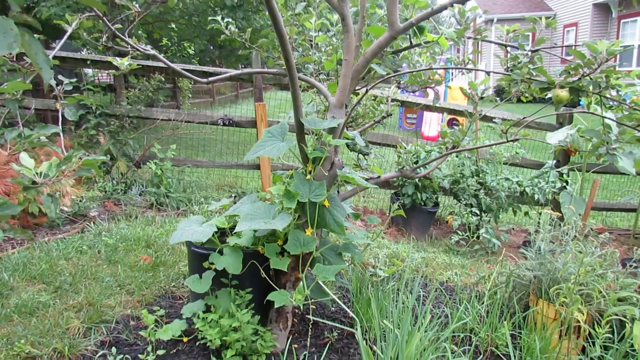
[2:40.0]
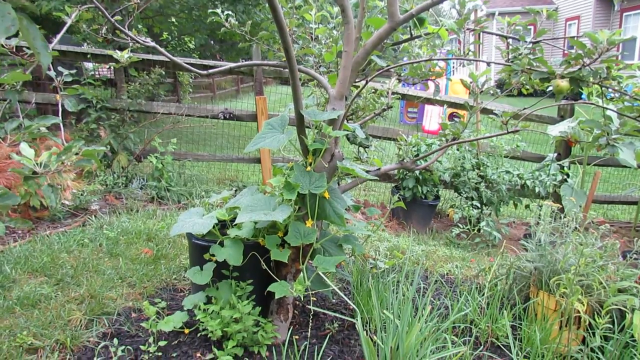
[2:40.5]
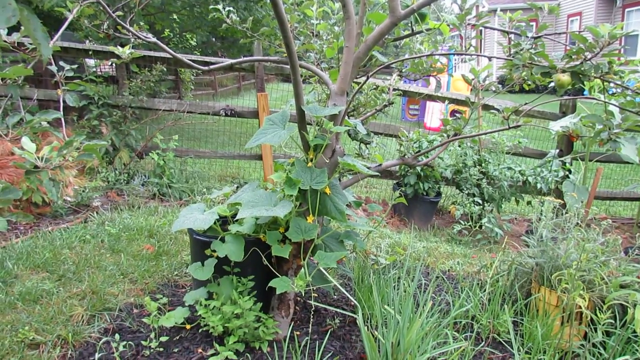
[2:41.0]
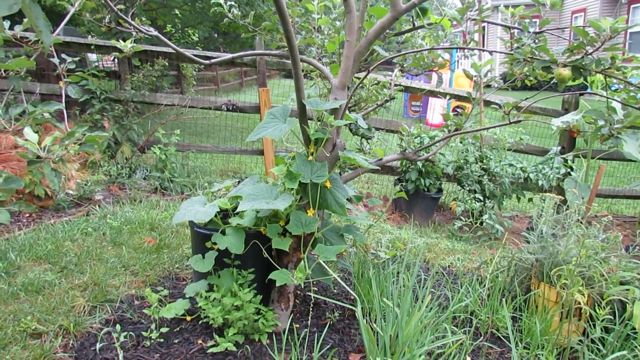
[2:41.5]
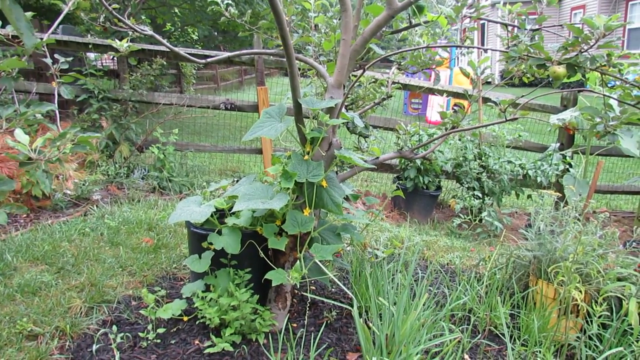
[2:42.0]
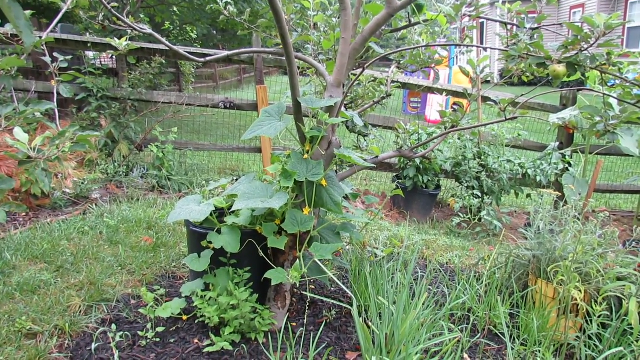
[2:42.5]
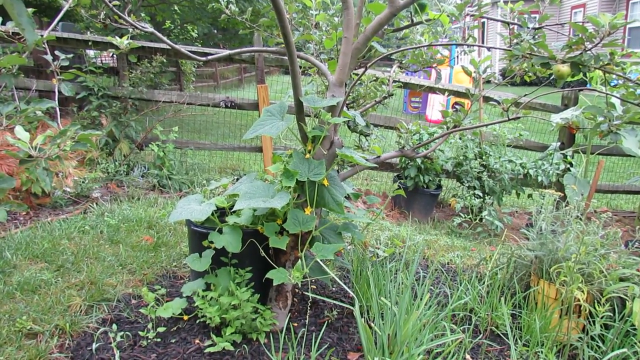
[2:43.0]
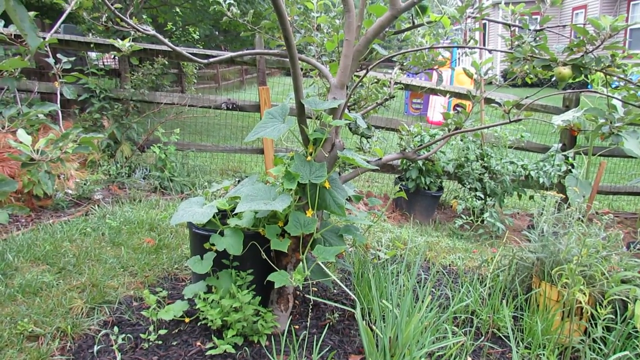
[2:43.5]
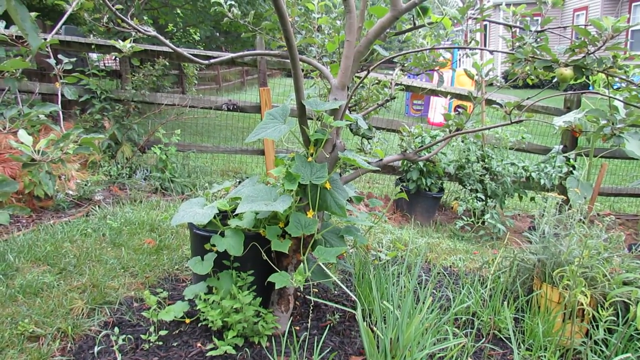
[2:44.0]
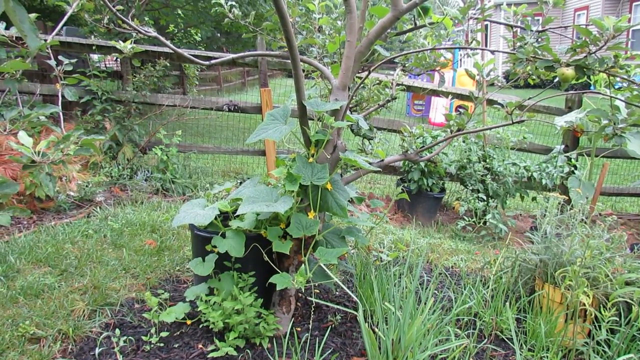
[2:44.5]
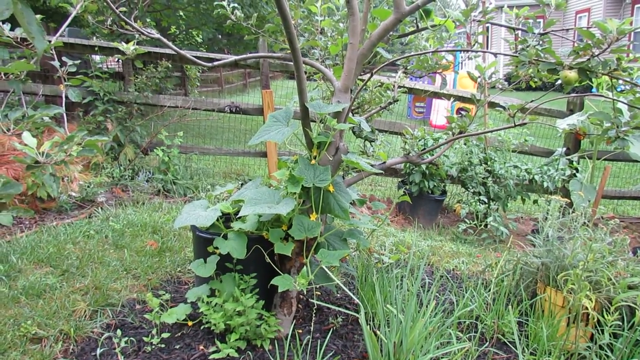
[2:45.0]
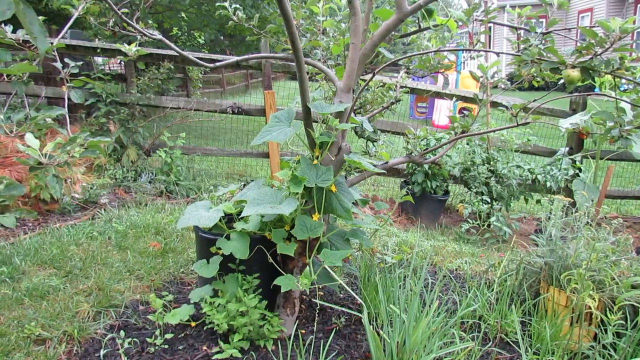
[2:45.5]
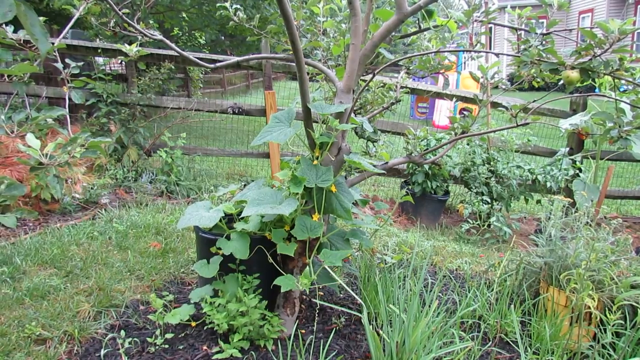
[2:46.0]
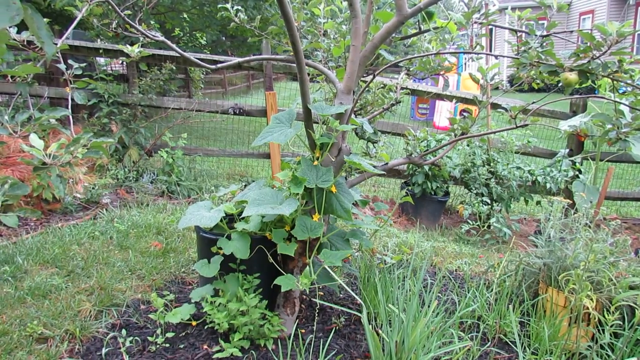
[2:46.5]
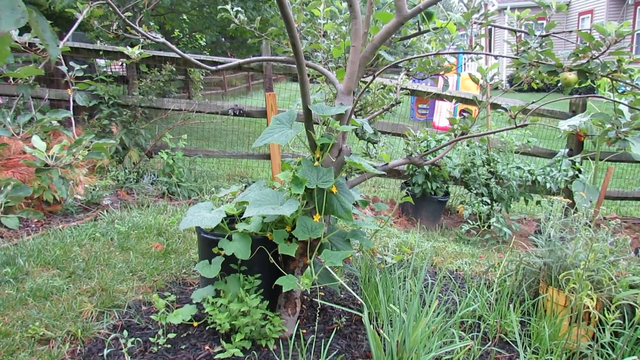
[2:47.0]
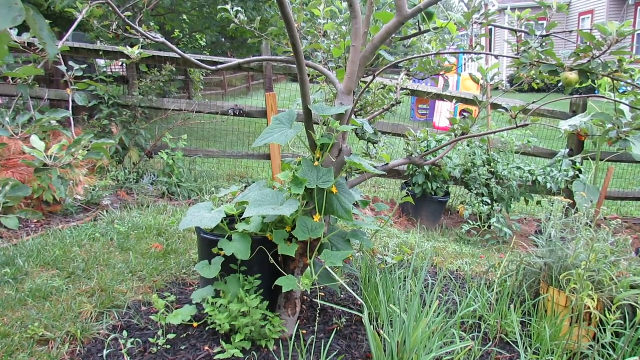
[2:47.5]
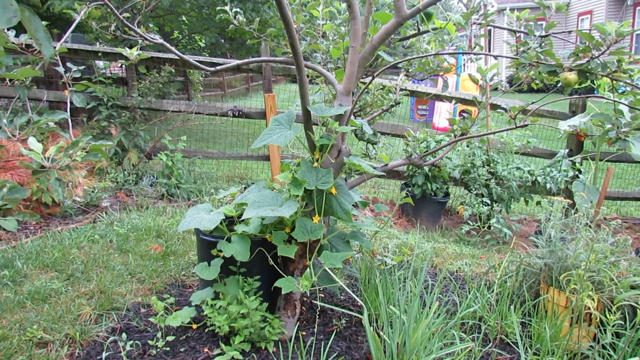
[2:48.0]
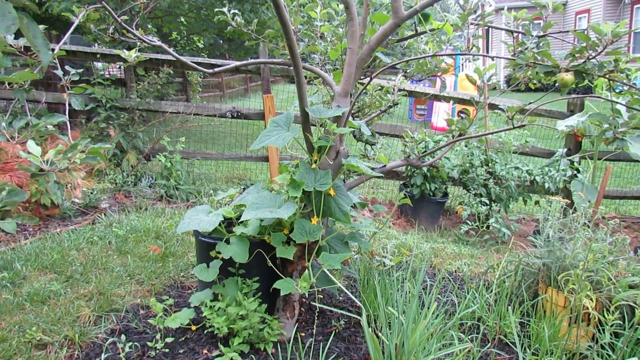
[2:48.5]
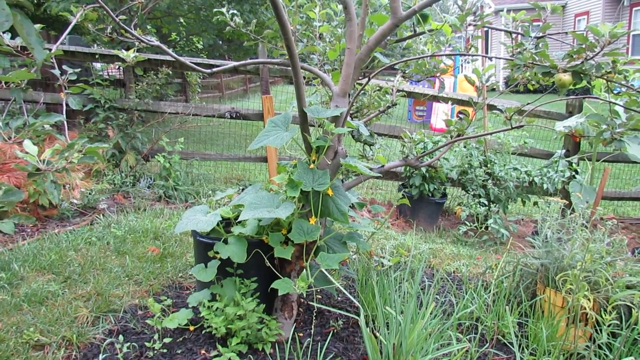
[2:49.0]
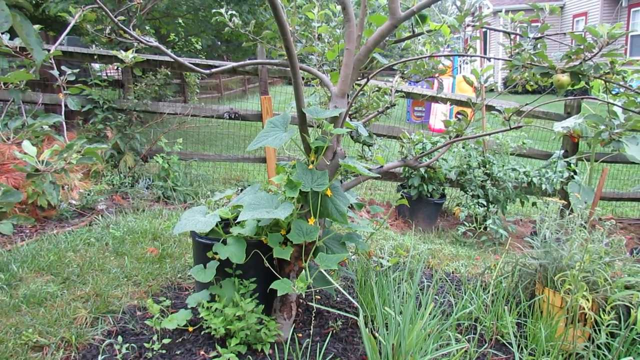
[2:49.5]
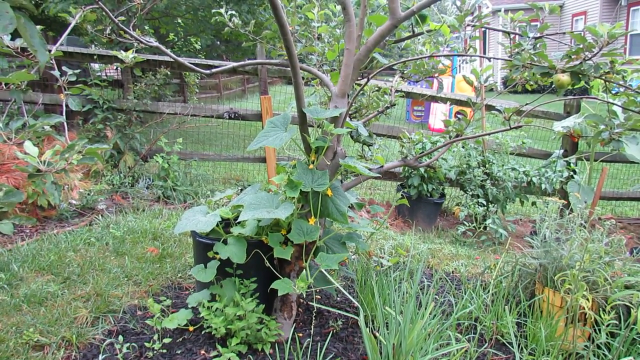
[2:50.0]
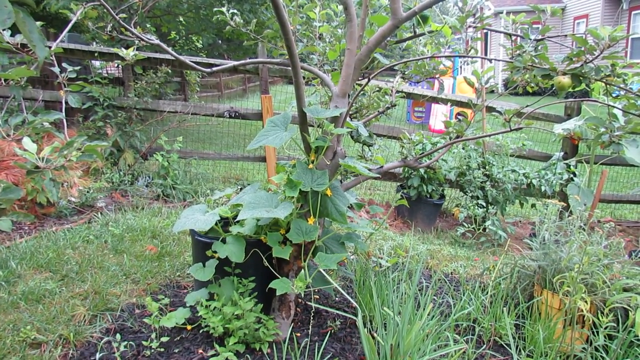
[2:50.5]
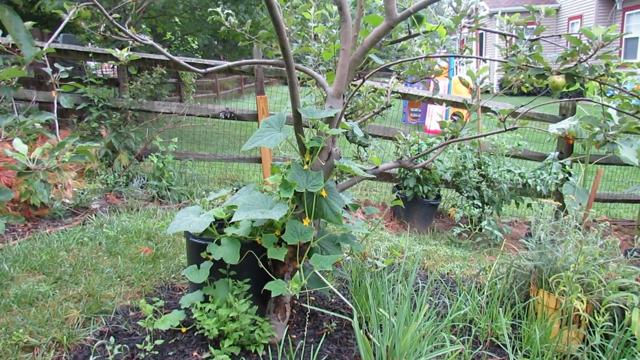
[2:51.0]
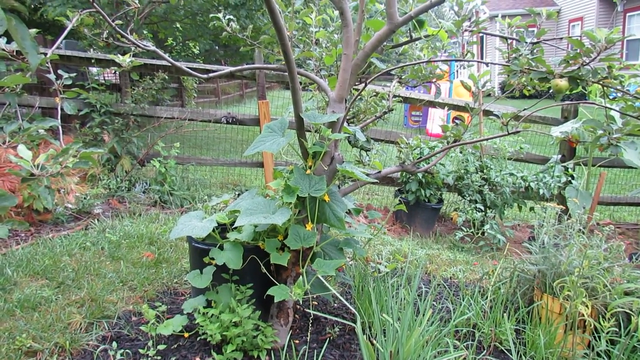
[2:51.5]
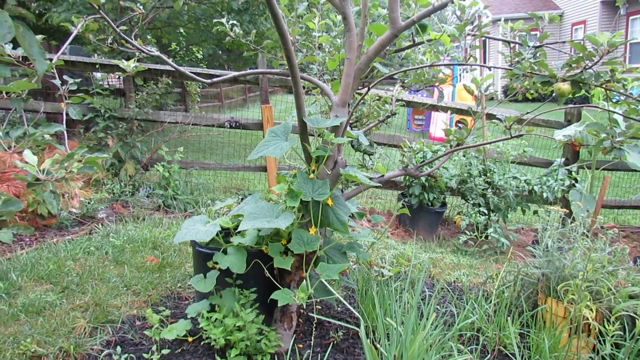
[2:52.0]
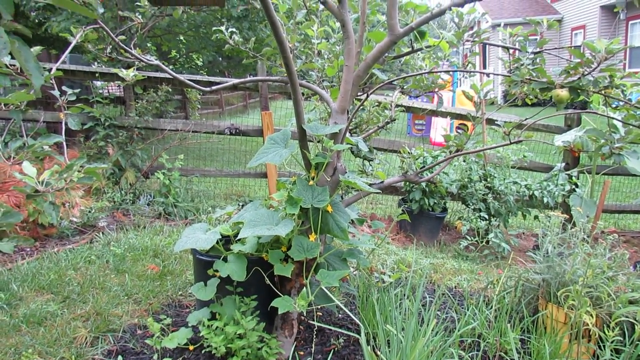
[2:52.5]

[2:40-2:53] The camera stays mostly in one place, with a little movement probably from the person holding the camera or phone. It focuses on the pear tree in the backyard with a green plant with small yellow flowers, presumably the cucumber plant, growing up it. Ferns grow mostly on the lower right of the frame, and another plant in a black pot is in the background to the right. Some kind of wood plank rests along one of the fence posts, and an old-fashioned wood gate or fence in the background separates the property of the person filming from the neighbor's house. Ads pop up over the background, as at the end of a YouTube video, but more plants and greenery can be made out on the left and the neighbor's house on the right.